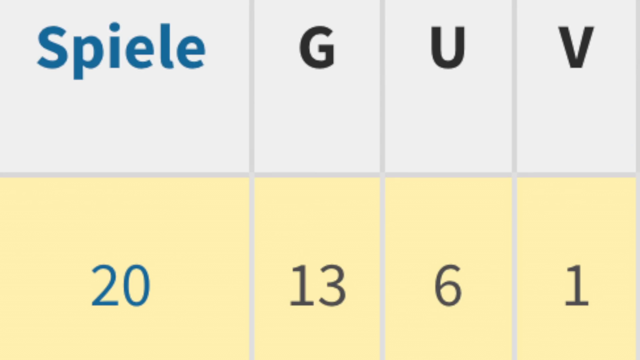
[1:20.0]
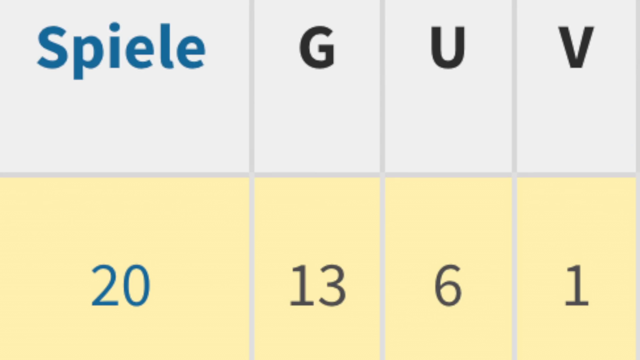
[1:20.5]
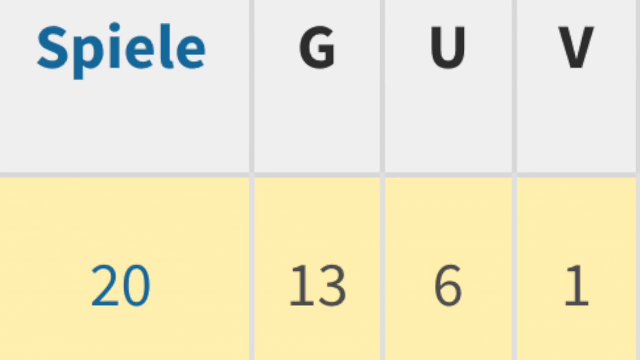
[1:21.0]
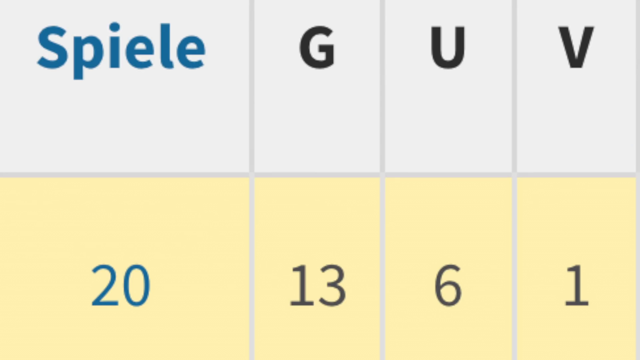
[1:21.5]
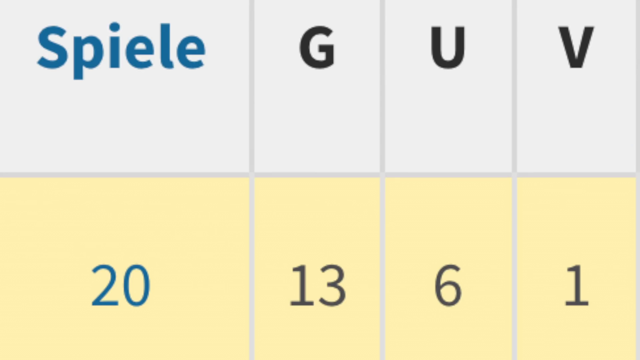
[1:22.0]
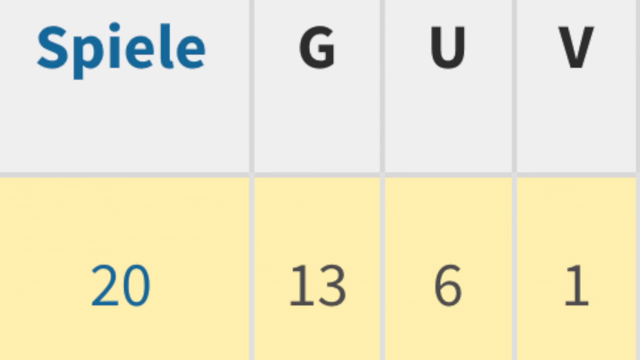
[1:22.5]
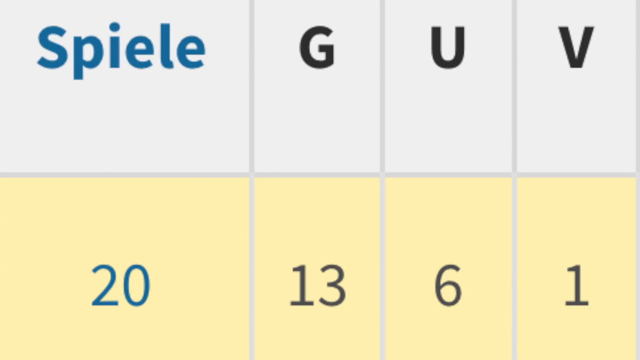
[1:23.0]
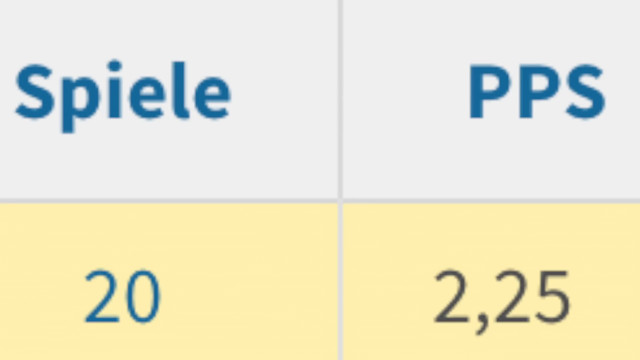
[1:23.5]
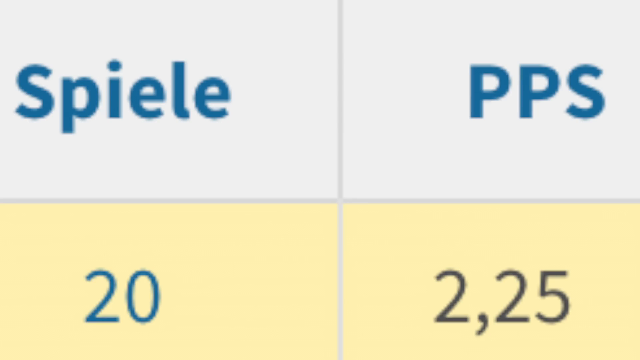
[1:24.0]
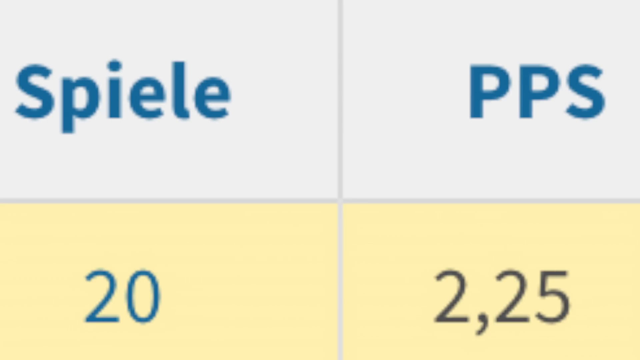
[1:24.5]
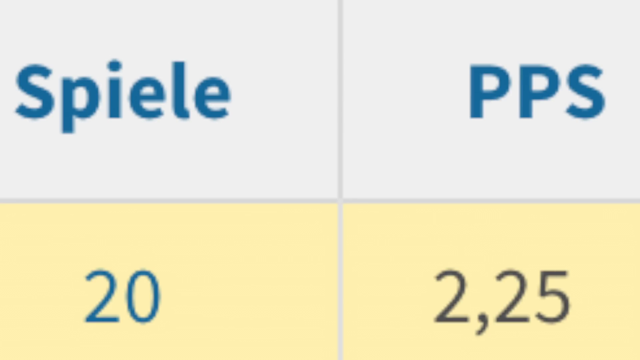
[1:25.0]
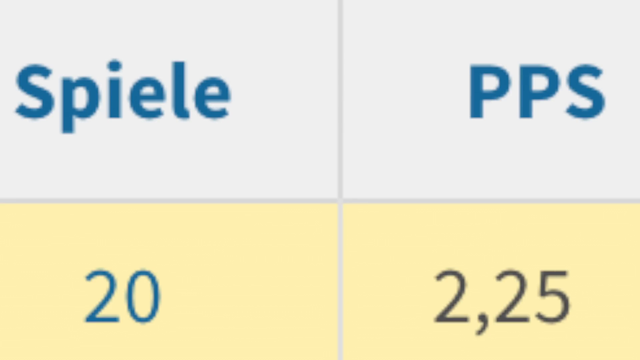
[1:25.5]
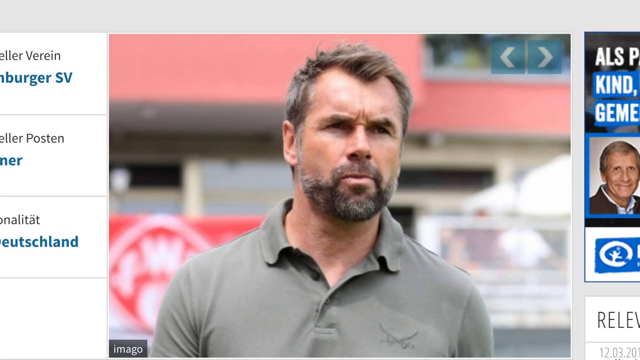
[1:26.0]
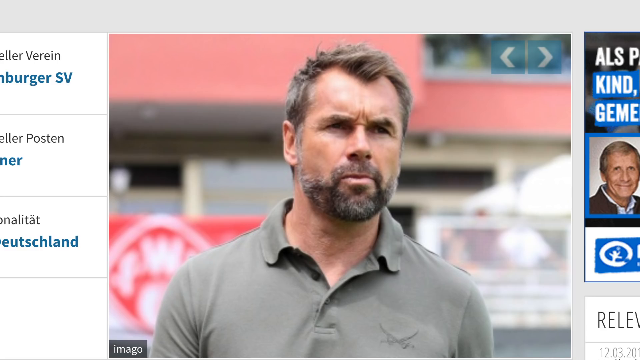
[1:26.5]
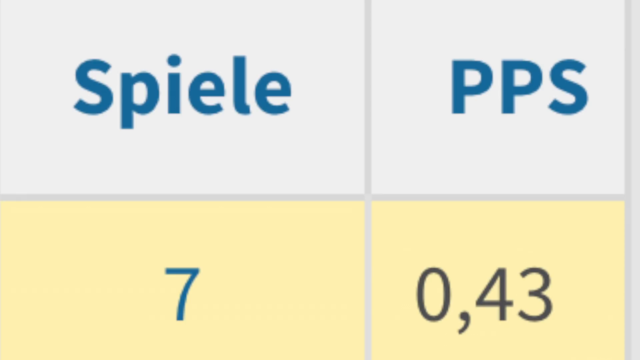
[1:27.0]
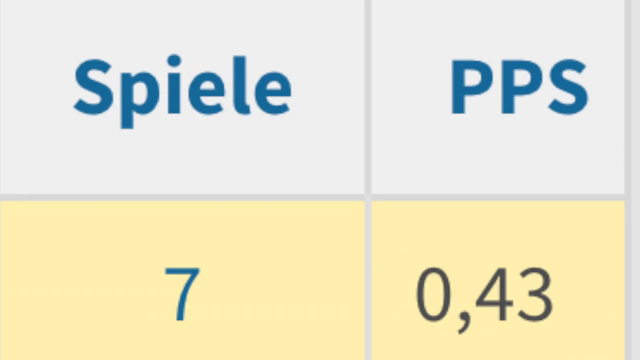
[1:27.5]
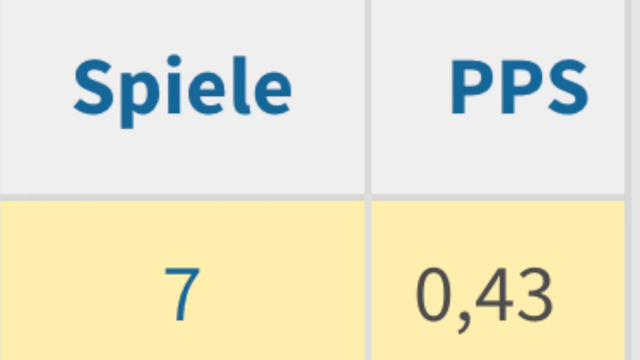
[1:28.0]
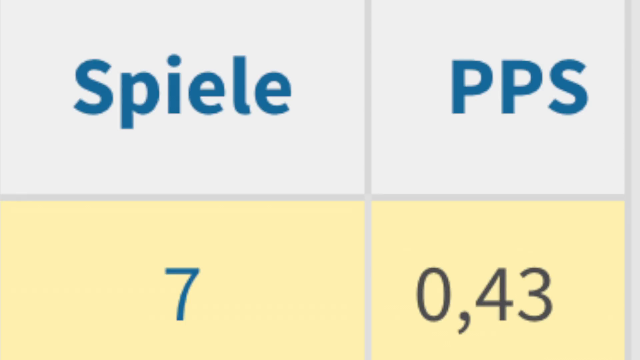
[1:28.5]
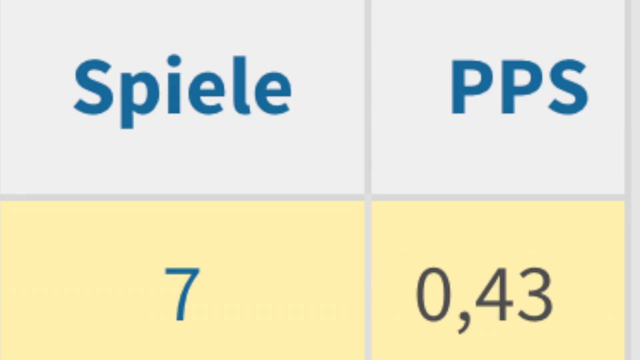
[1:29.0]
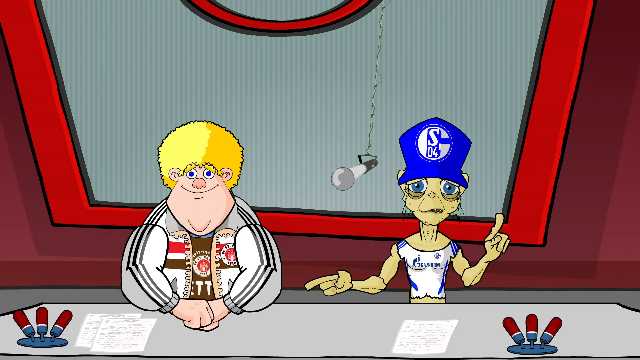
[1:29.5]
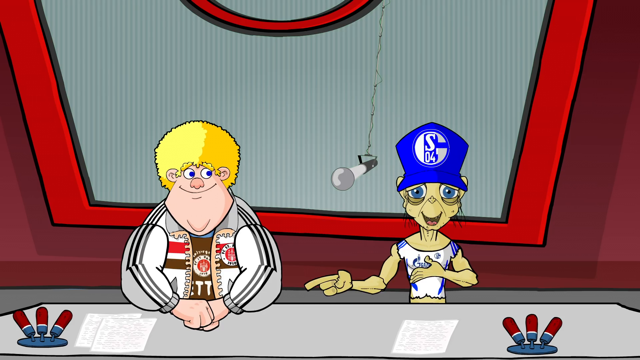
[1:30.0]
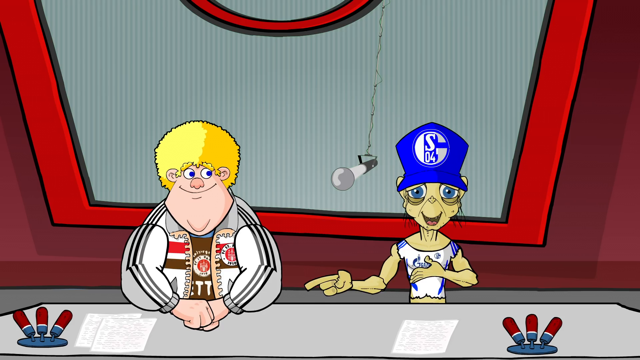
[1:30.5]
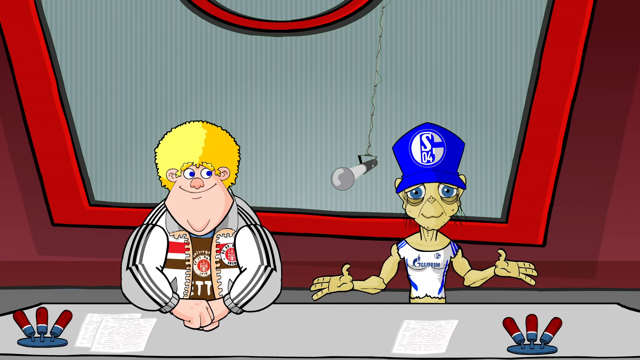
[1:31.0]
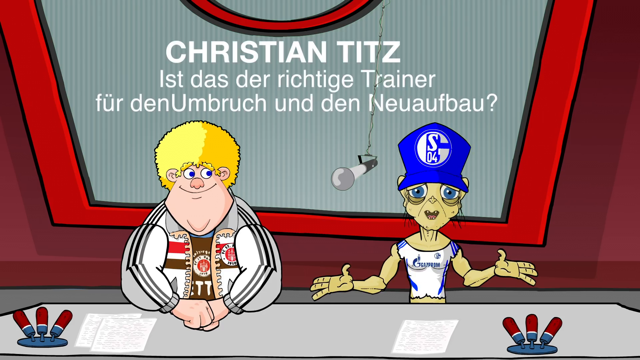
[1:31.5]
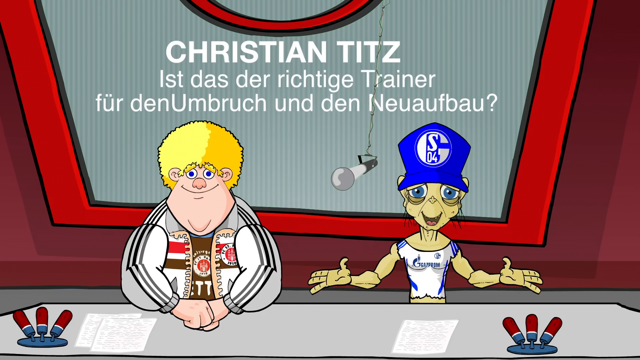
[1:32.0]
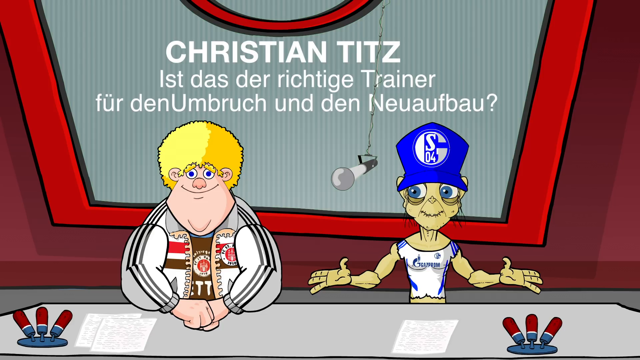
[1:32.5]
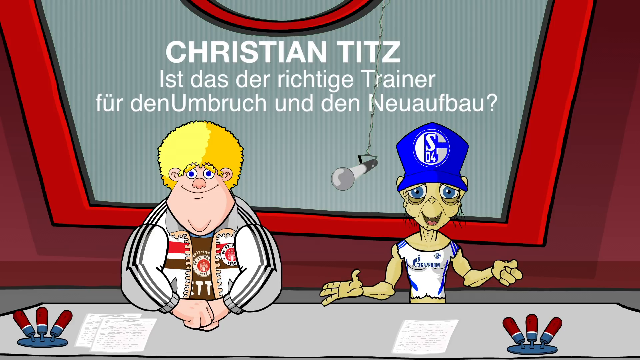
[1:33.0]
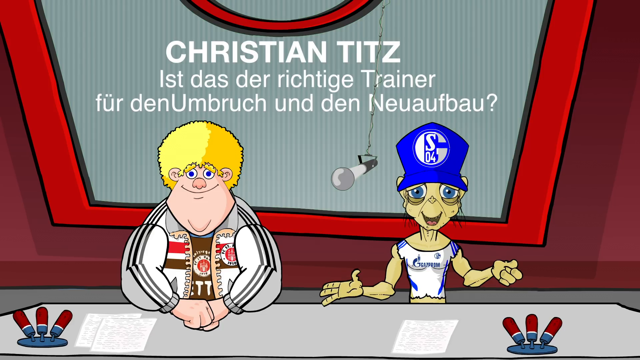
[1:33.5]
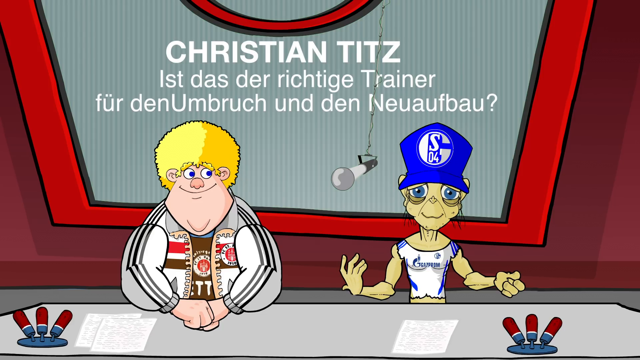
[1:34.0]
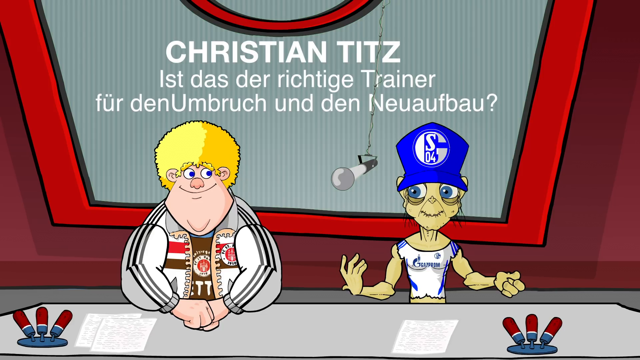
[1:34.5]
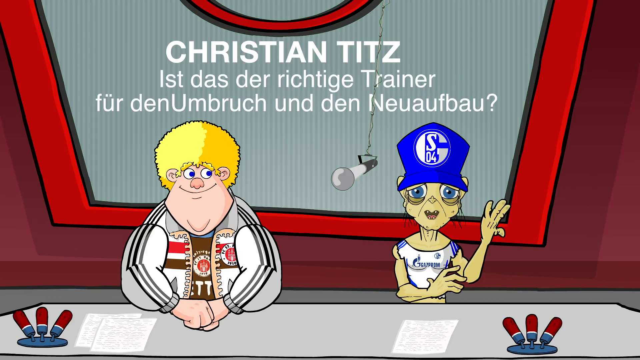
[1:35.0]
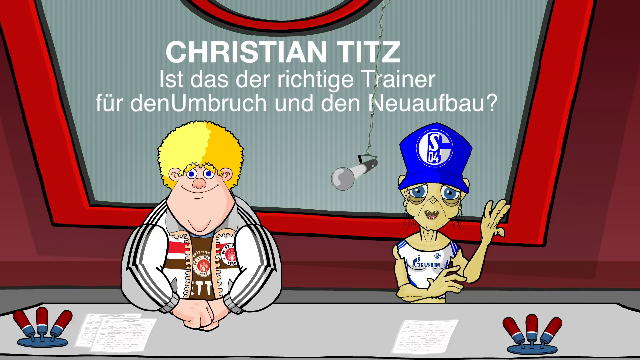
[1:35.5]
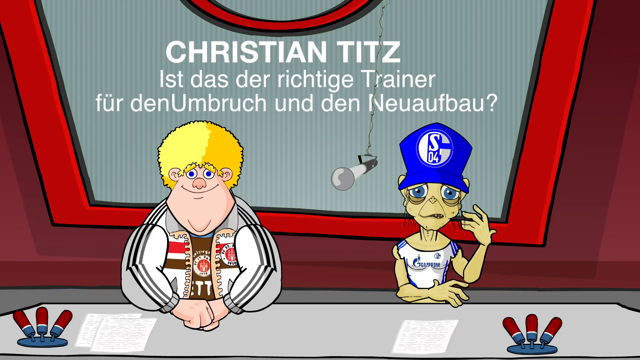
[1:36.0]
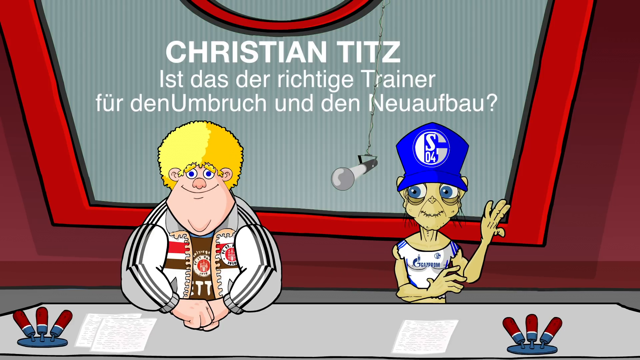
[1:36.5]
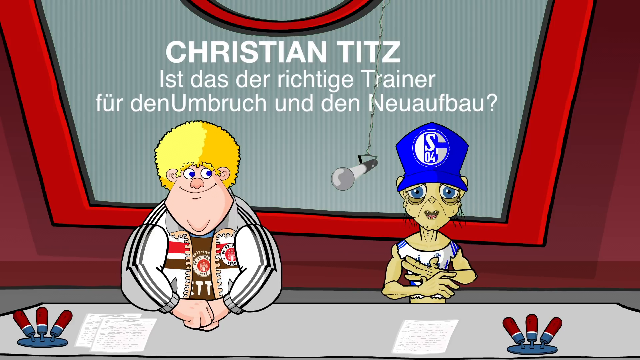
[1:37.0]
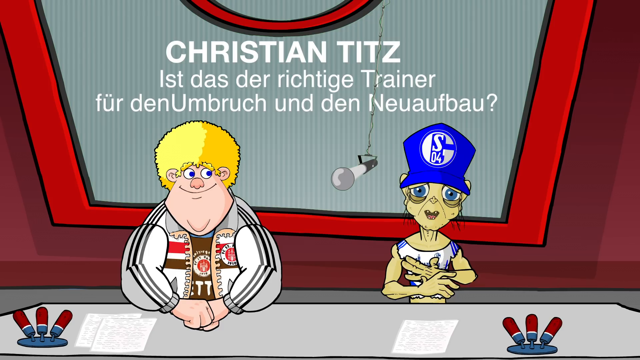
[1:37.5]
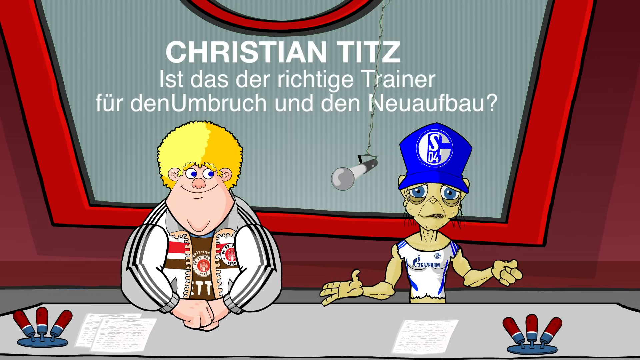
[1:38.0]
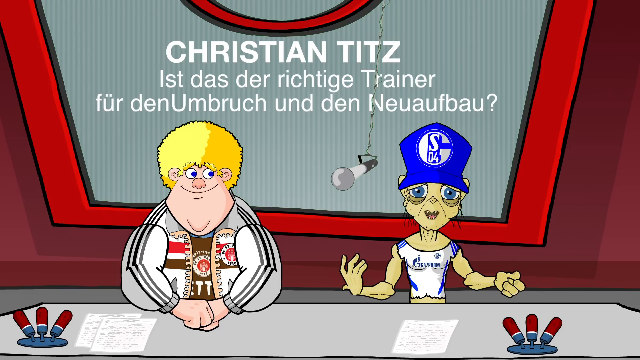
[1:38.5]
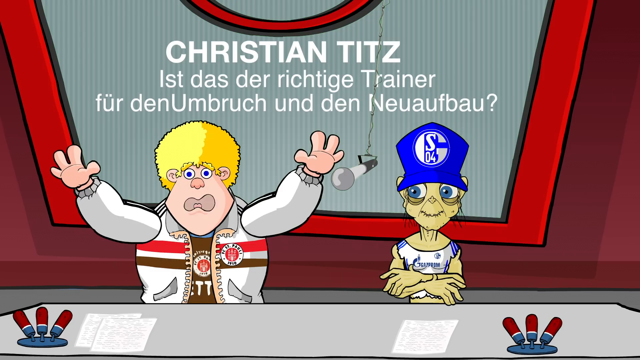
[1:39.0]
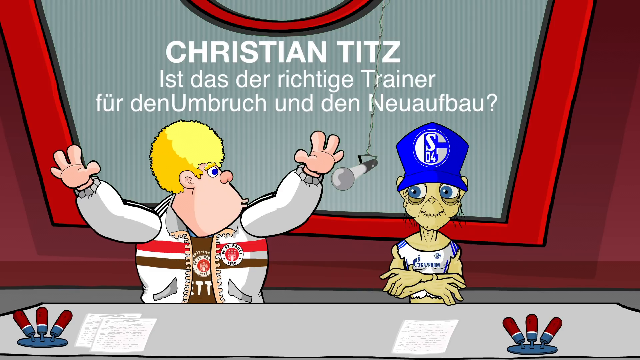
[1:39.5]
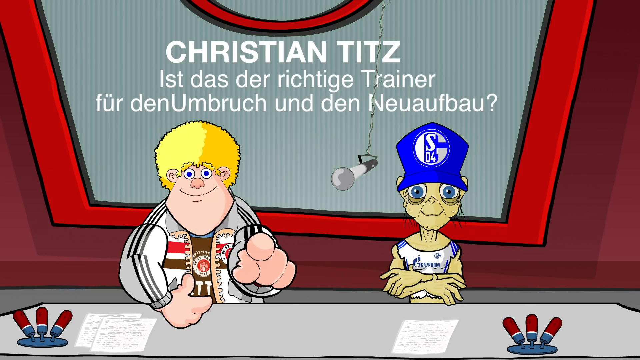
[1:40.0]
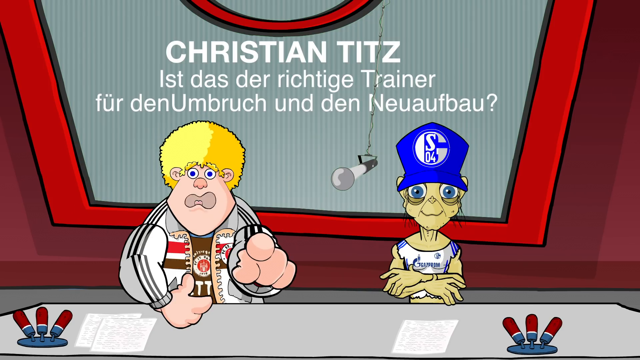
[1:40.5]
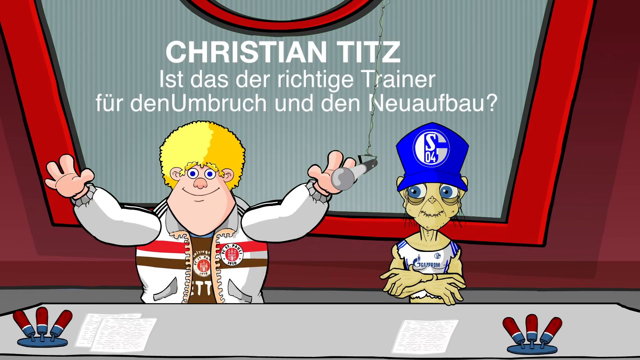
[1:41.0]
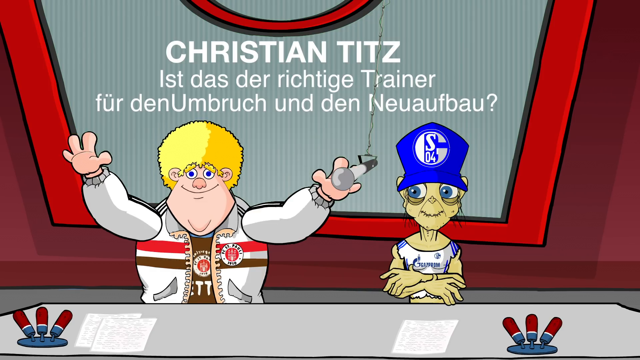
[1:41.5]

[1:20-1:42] A screen shows various text, possibly German words, along with other information, before transitioning back to the characters: an individual with curly yellow hair, and an alien with blue eyes, a blue hat and a whitish blue shirt, along with the other, larger individual with a large chin and blondish hair, who wears a white shirt with black and gray lines and some sort of red and brown depiction in the middle. They keep talking until the end, with no other subjects shown and only one transition between the two screens, and the video ends after a closing commentary by the two individuals.